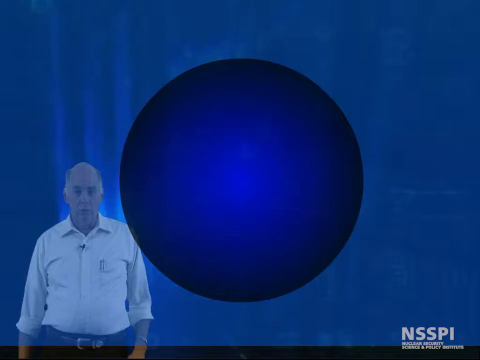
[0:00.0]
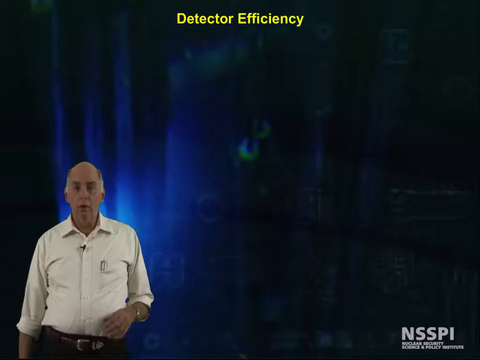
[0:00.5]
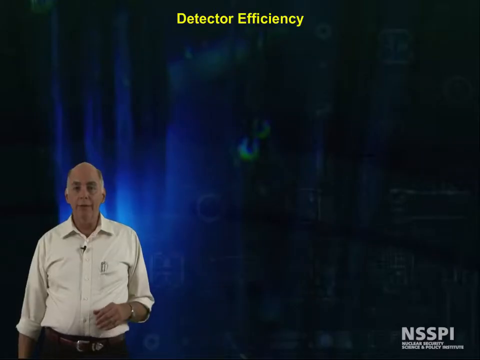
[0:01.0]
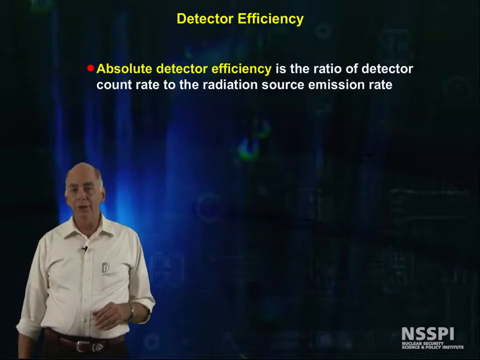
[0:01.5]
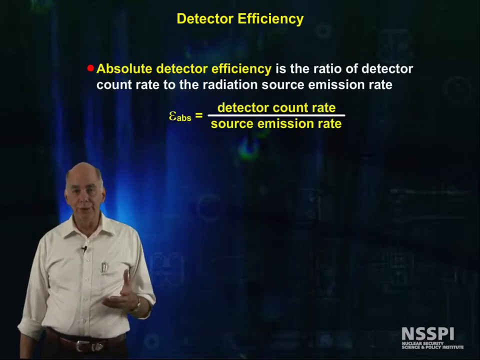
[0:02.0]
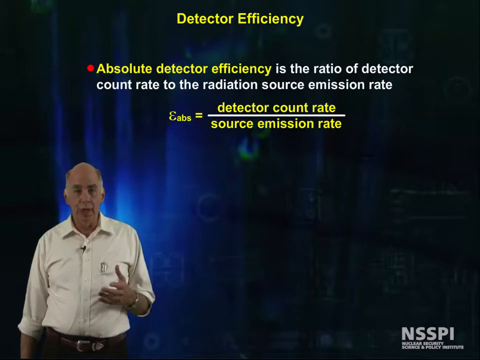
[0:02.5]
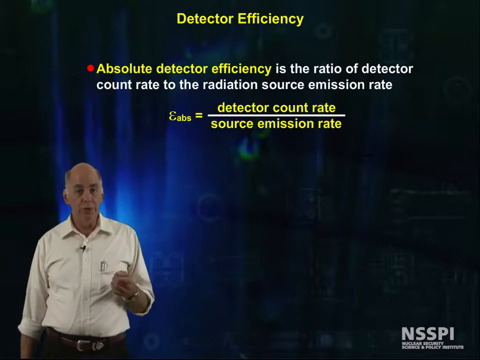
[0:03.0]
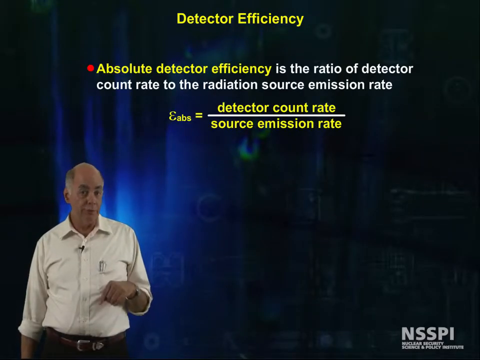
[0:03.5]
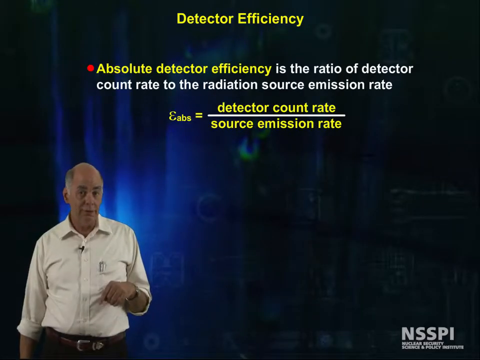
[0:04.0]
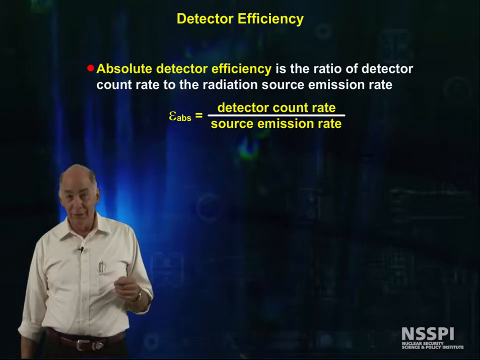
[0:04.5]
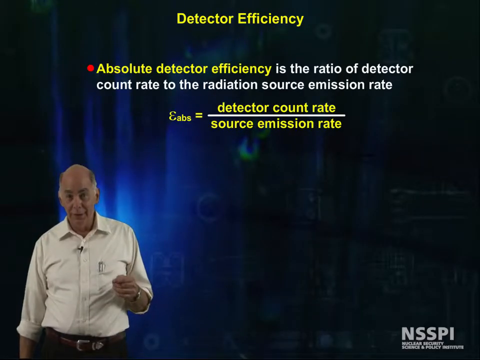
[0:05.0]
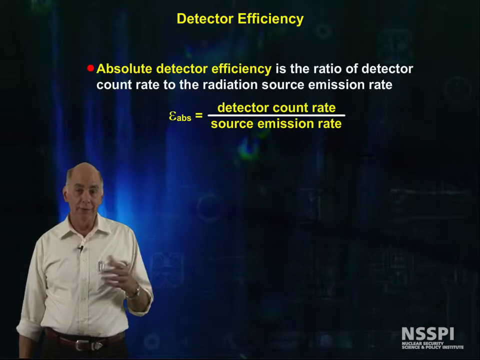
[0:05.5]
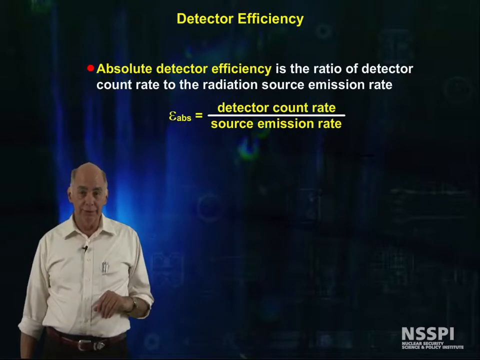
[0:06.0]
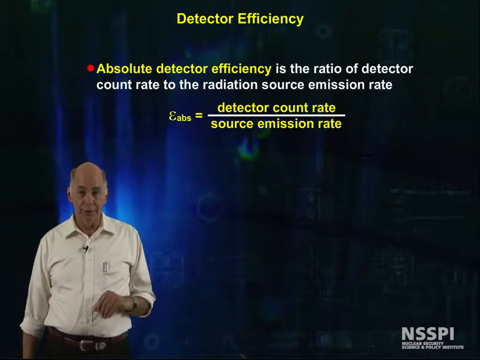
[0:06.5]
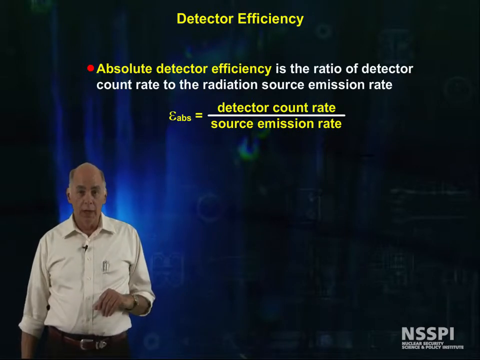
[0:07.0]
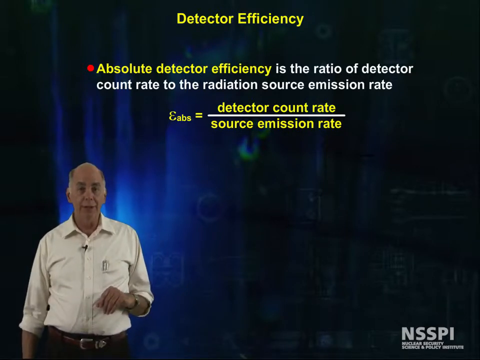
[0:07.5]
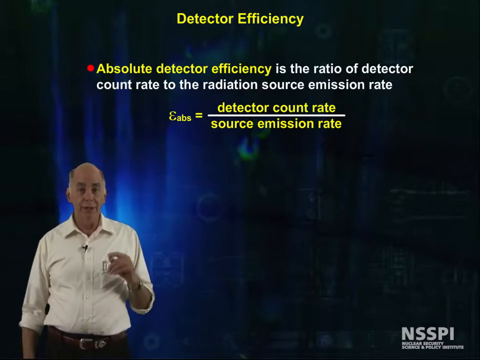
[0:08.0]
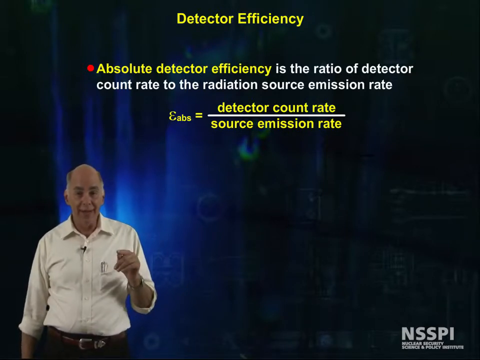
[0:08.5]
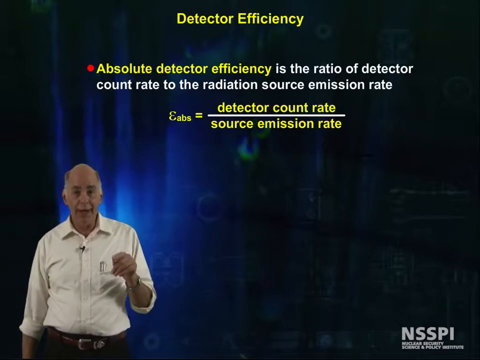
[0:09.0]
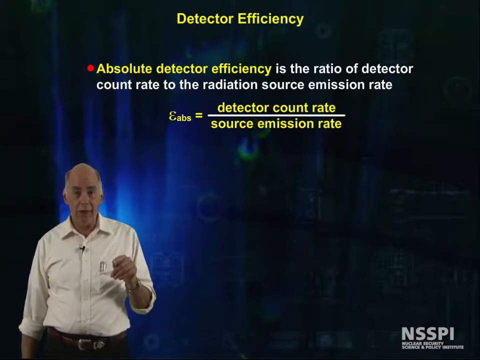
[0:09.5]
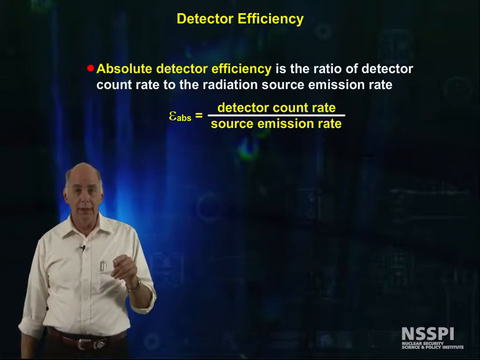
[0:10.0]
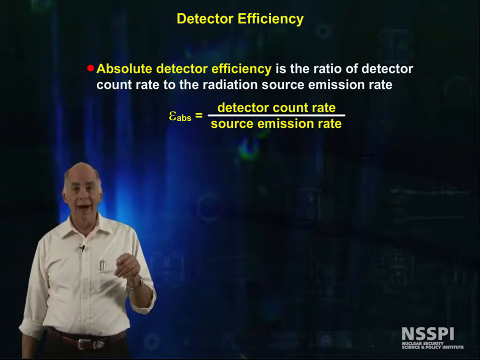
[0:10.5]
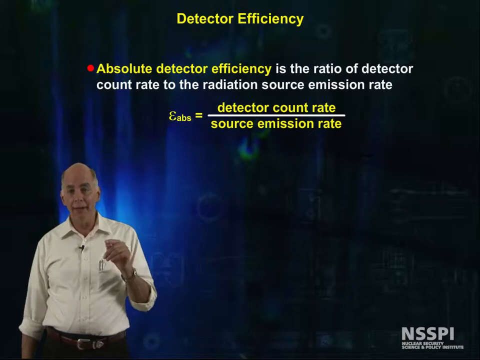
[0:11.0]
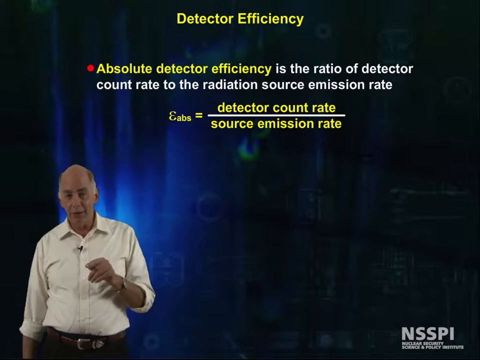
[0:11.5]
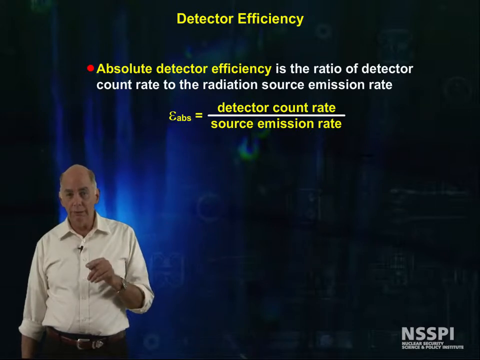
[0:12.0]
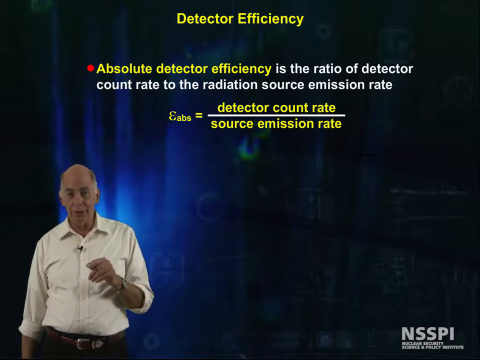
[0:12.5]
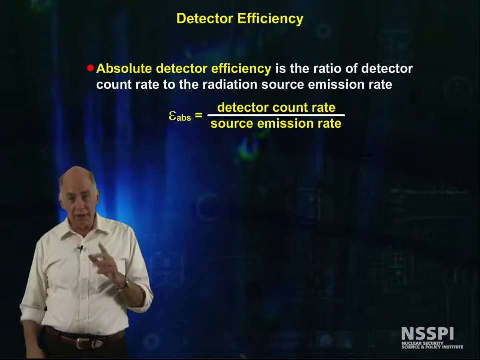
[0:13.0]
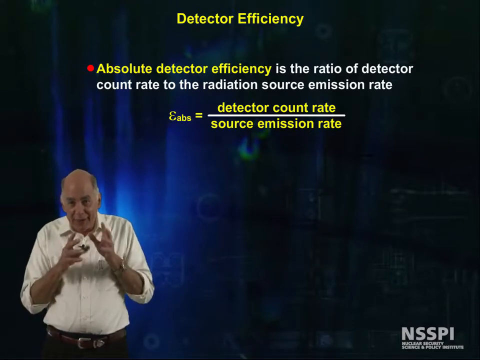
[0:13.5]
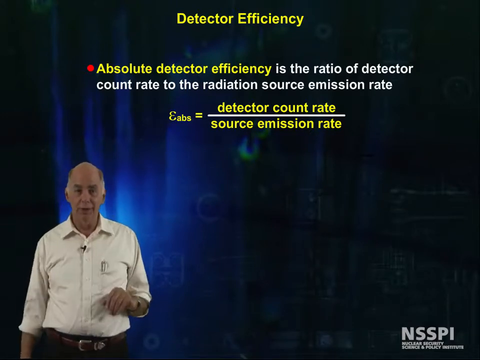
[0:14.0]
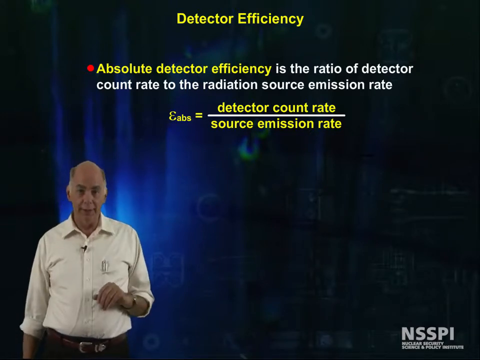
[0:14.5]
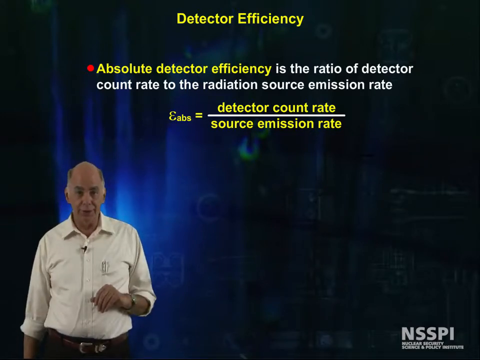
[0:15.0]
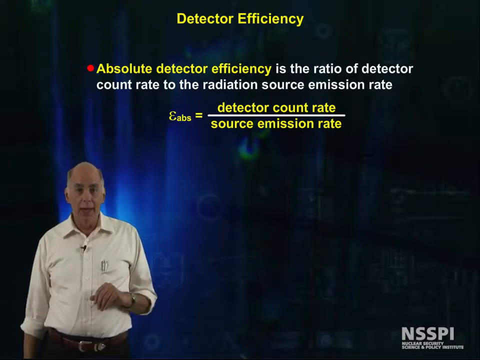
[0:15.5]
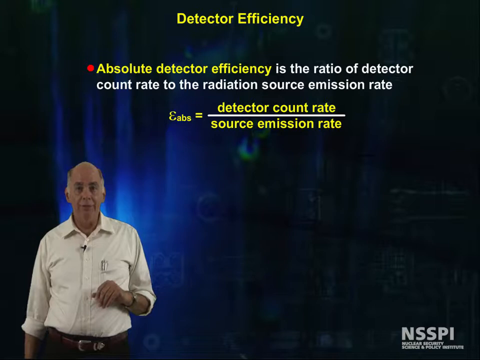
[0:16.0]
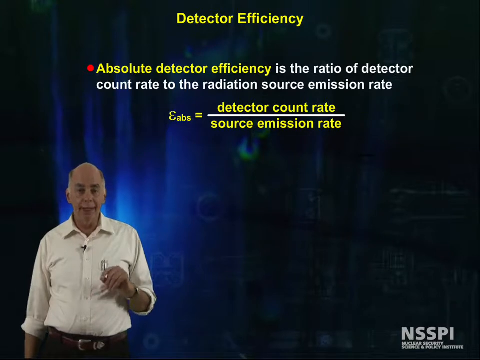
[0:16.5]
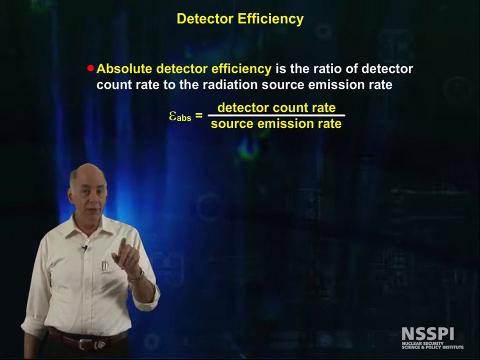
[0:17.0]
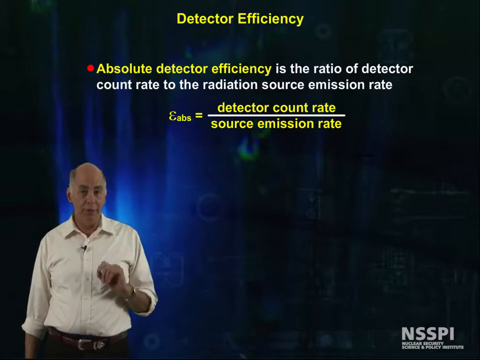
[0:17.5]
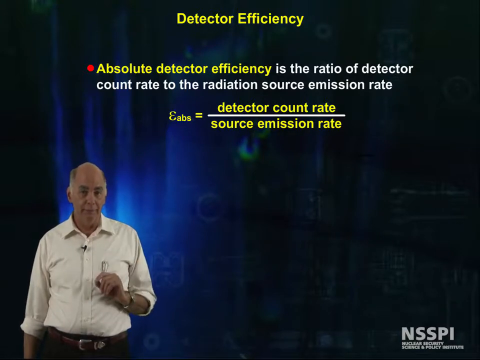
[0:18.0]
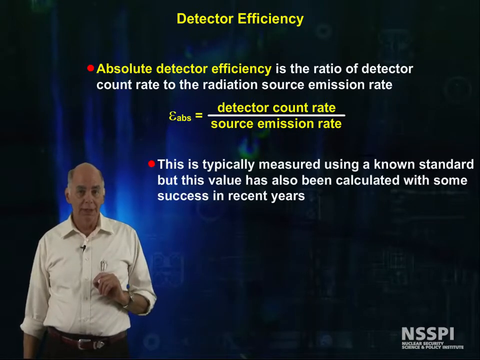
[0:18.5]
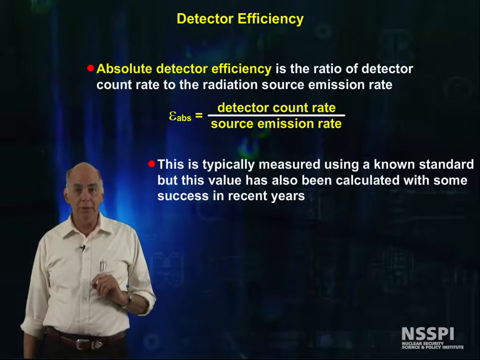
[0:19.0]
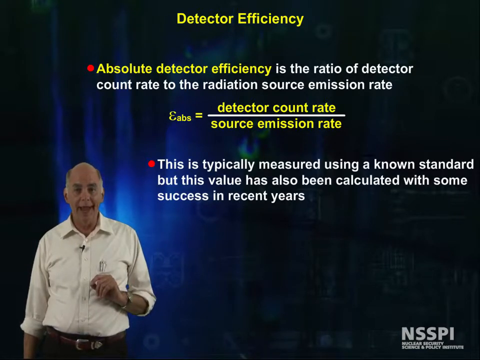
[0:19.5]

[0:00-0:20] A man, approximately in his mid-fifties, stands in the lower left corner of the frame, seen from the waist up. He wears a white collared business shirt with the sleeves rolled up to his elbows, a watch on his left wrist, and a small black microphone attached to the top of his shirt. He is Caucasian, bald on top with gray salt-and-pepper hair on the sides, and he is speaking, apparently giving a speech in front of an audience, while looking straight ahead. At the top of the screen, in yellow and white text, are the words "detector efficiency," and below that, "Absolute detector efficiency is the ratio of detector count rate to the radiation source emission rate." A mathematical ratio is also shown, with "detector count rate" above the line and "source emission rate" below it. He uses his hands animatedly as he speaks, his left hand more expressively. The video then cuts to the next scene, a blue background of the curtains or visual behind him.